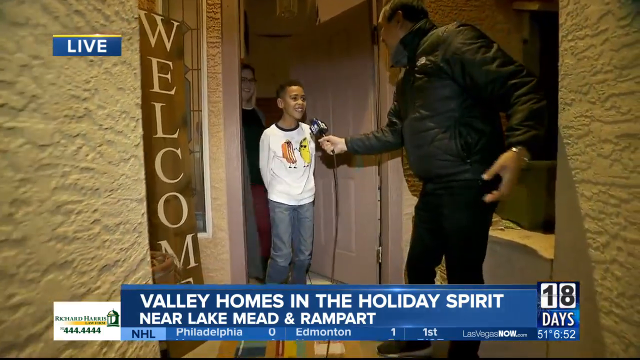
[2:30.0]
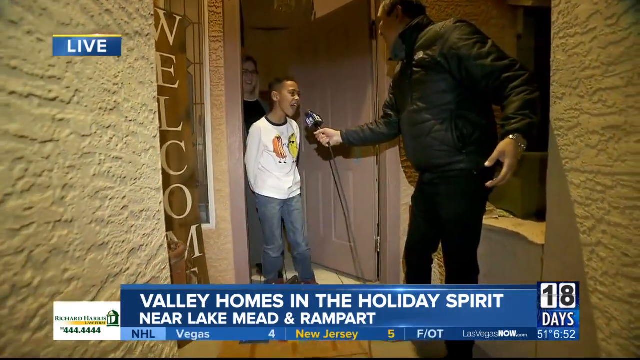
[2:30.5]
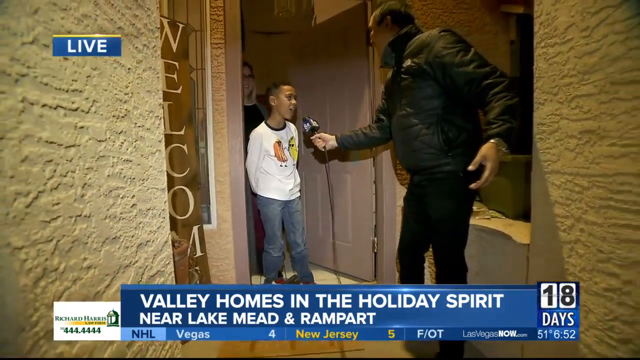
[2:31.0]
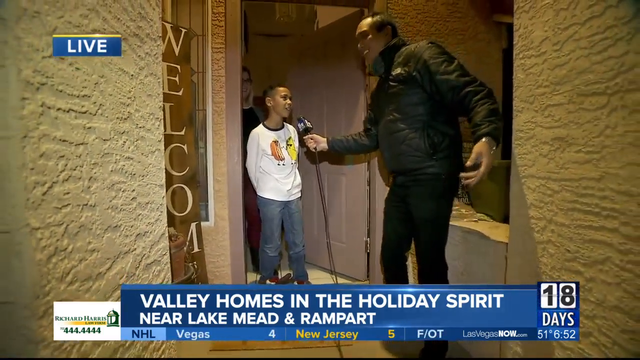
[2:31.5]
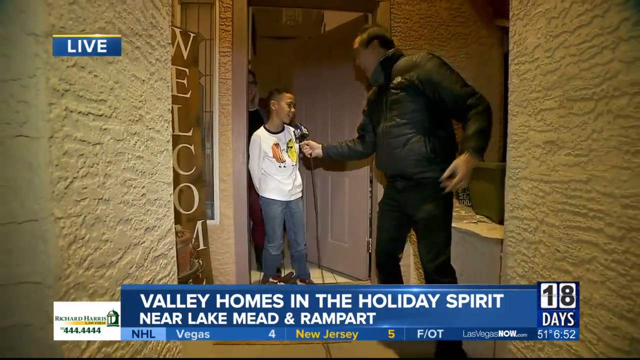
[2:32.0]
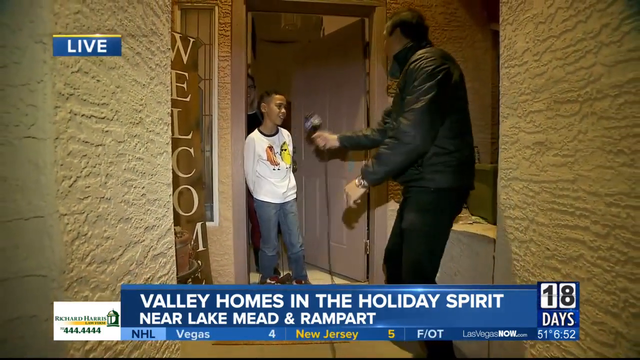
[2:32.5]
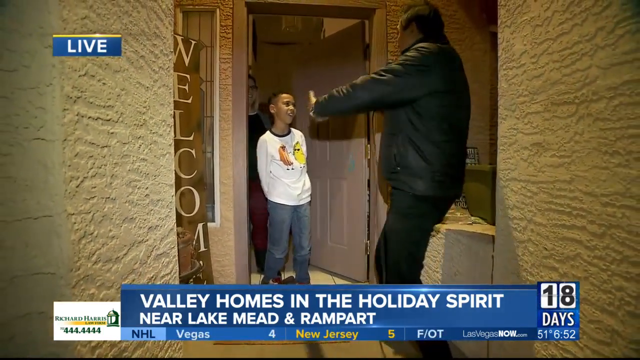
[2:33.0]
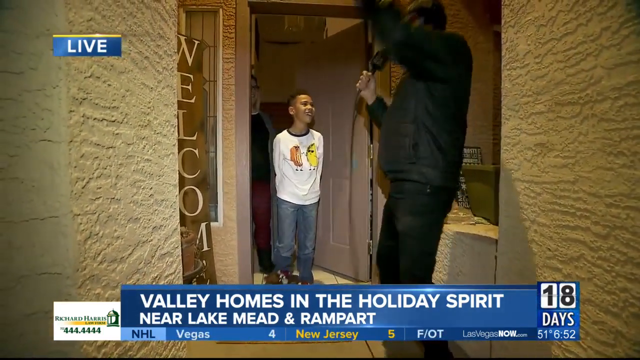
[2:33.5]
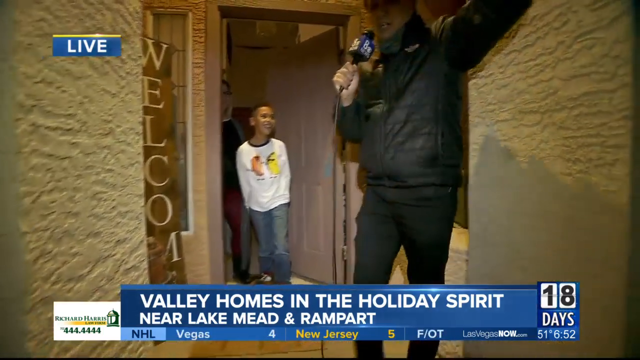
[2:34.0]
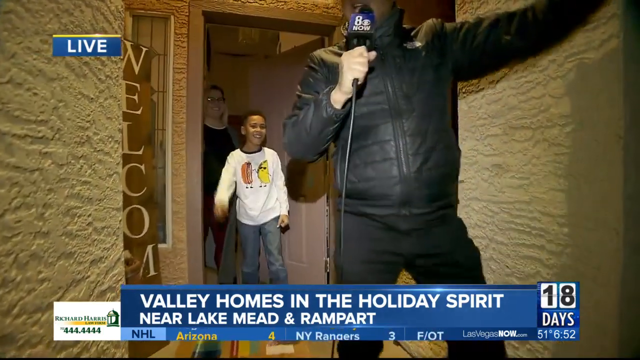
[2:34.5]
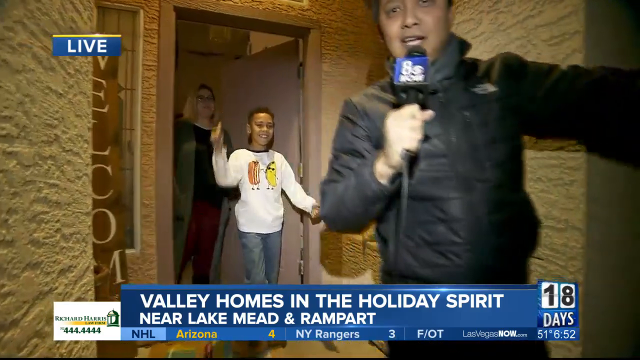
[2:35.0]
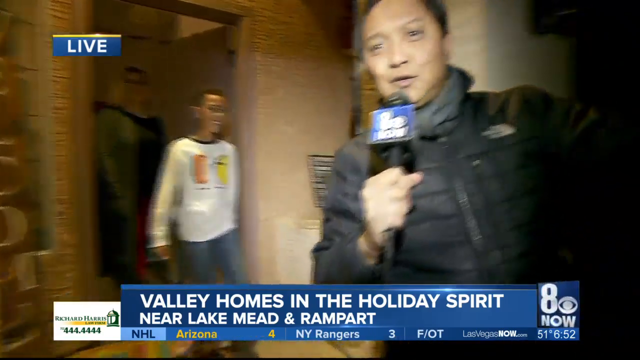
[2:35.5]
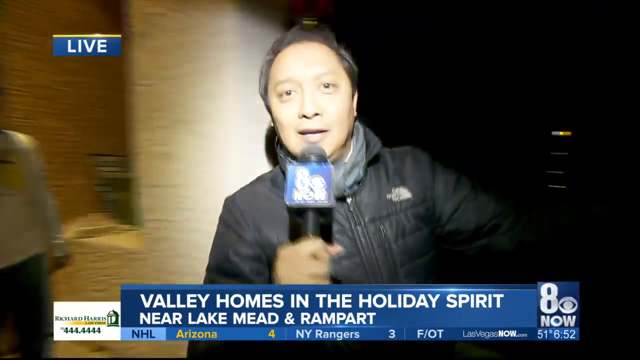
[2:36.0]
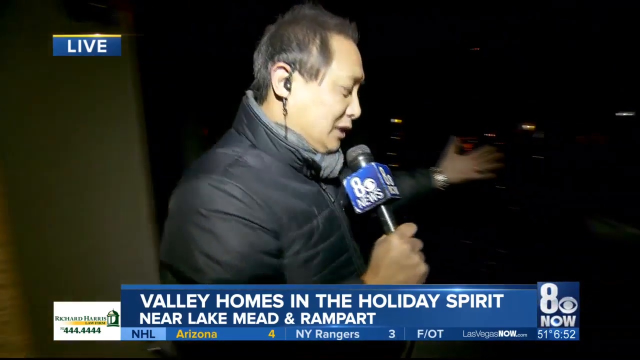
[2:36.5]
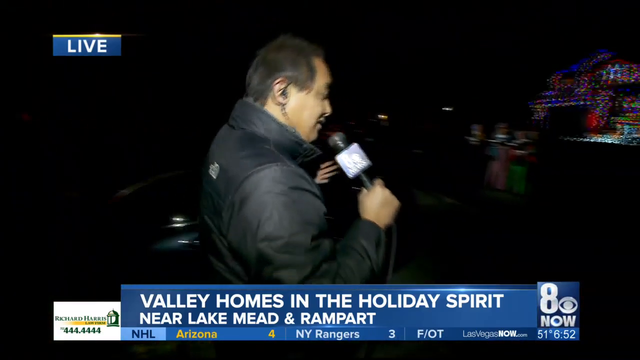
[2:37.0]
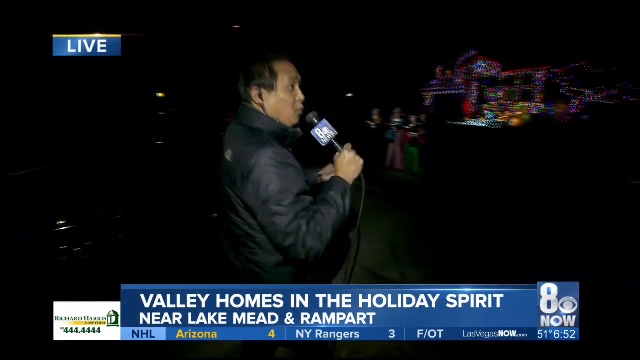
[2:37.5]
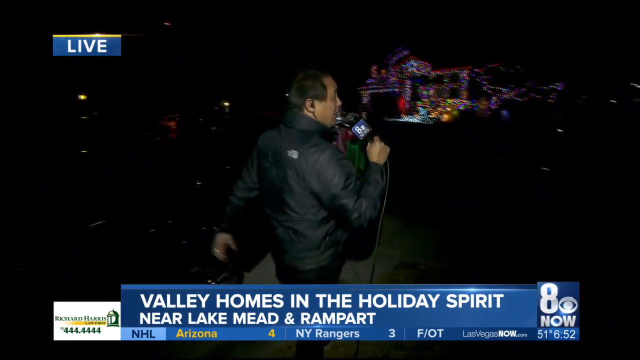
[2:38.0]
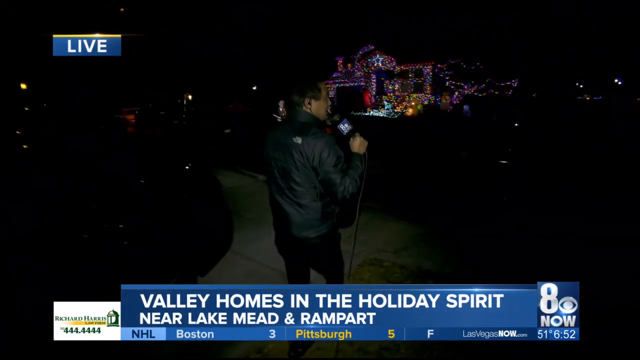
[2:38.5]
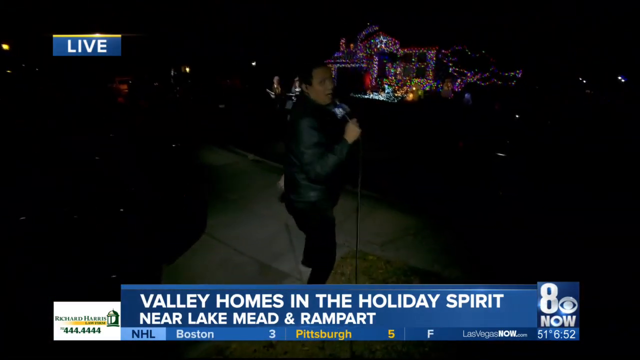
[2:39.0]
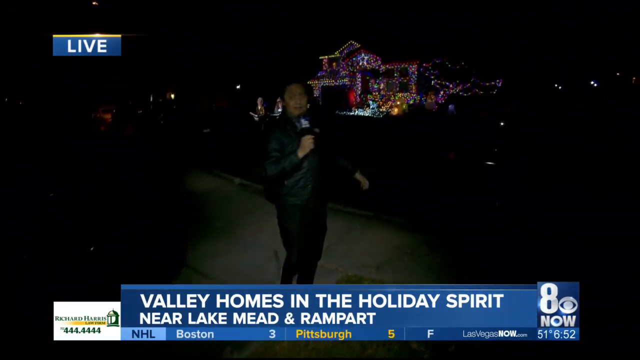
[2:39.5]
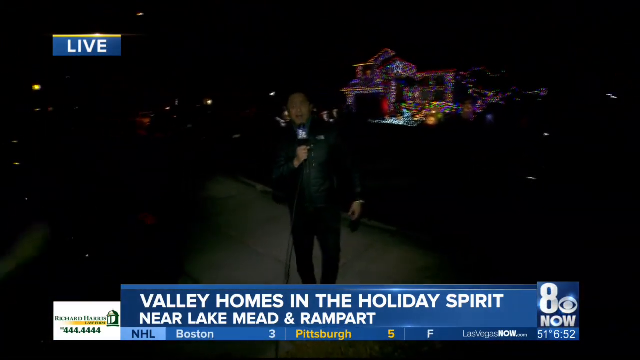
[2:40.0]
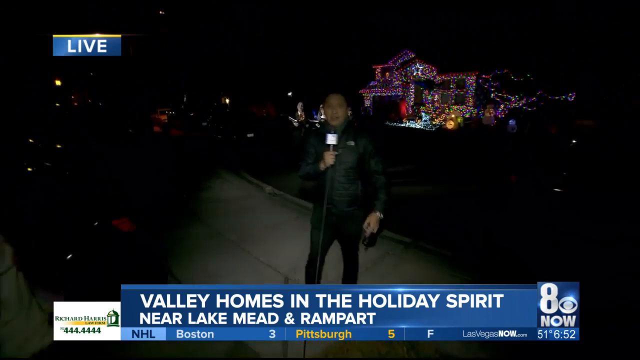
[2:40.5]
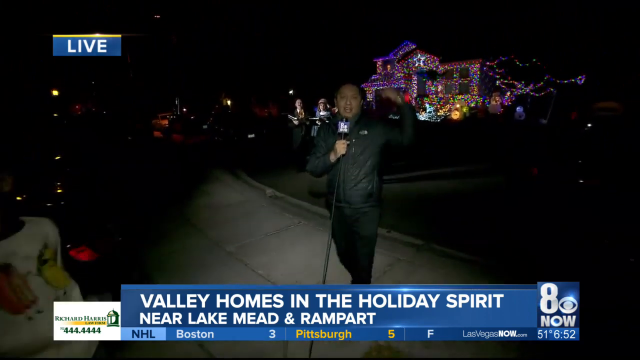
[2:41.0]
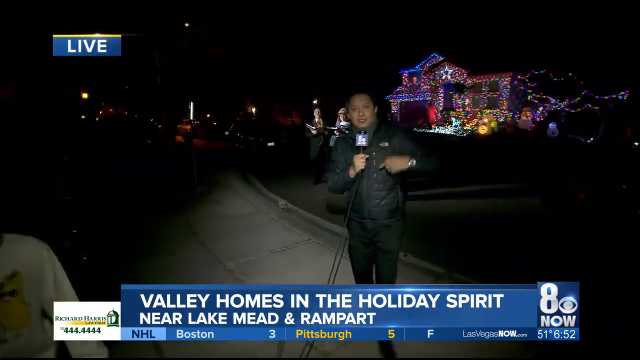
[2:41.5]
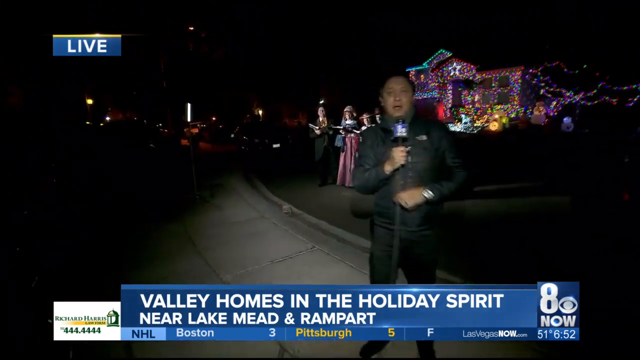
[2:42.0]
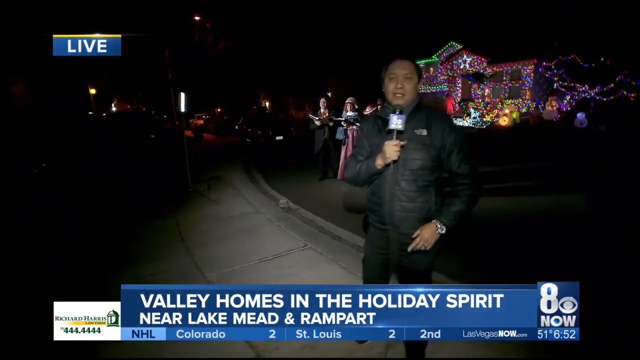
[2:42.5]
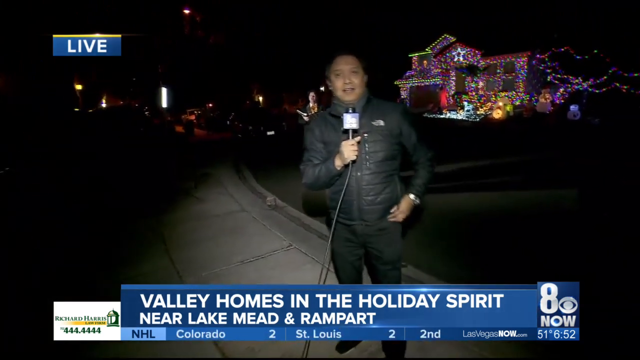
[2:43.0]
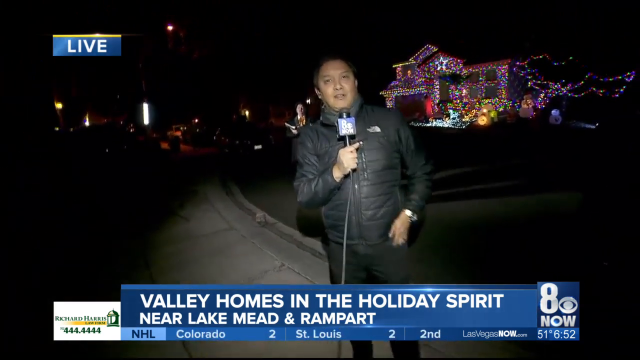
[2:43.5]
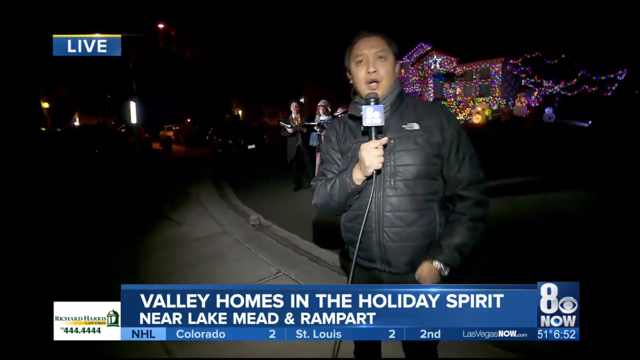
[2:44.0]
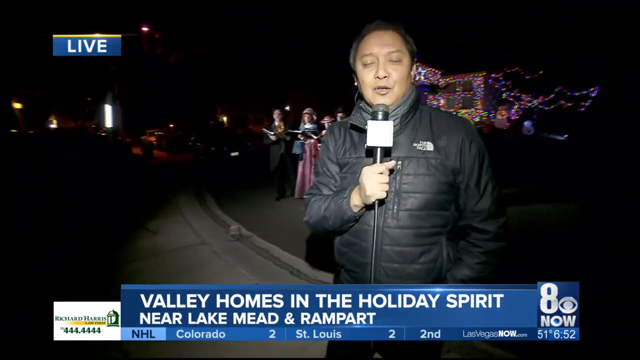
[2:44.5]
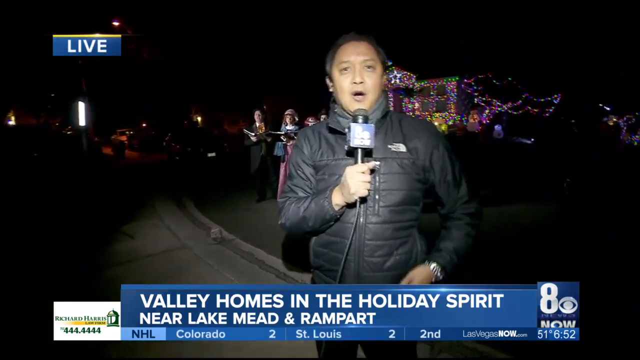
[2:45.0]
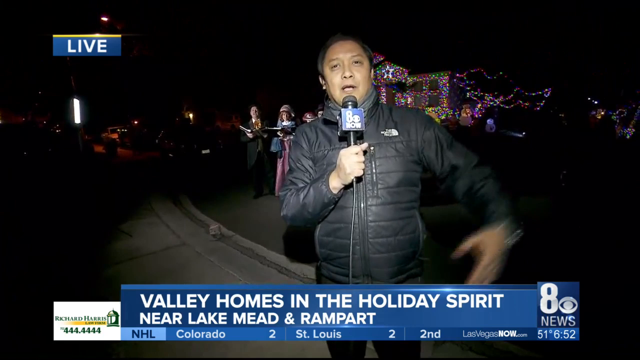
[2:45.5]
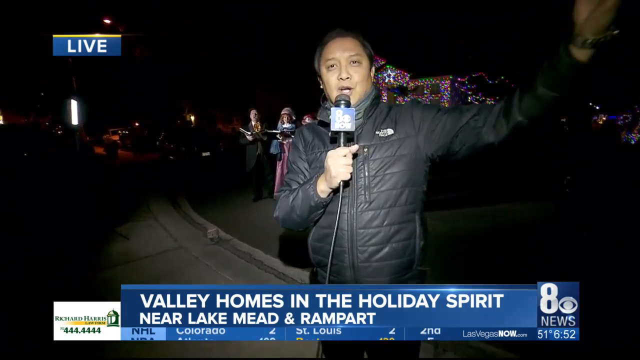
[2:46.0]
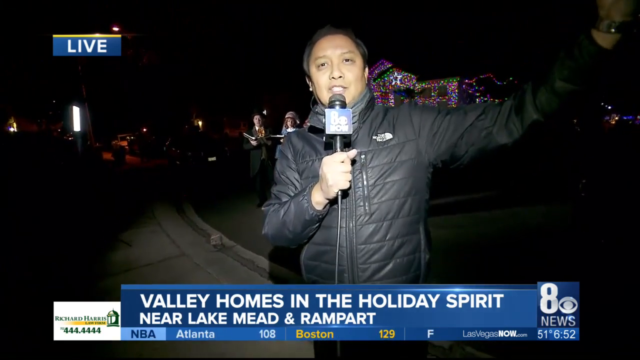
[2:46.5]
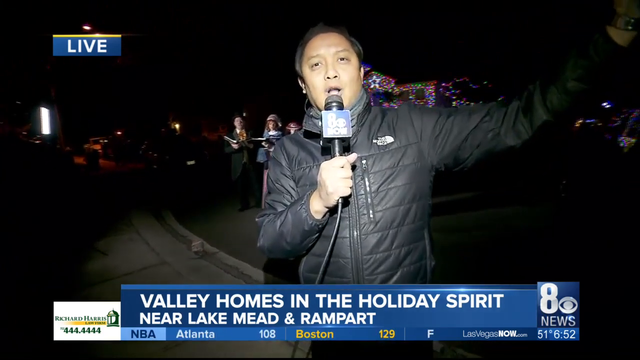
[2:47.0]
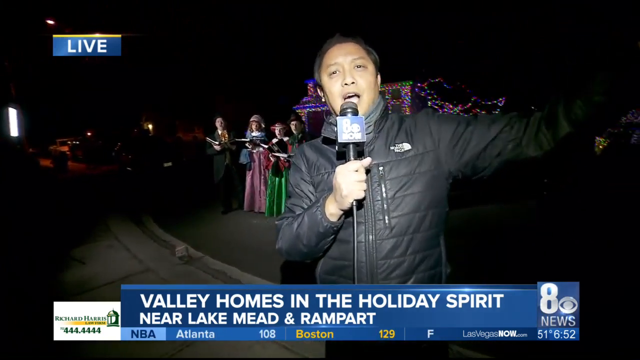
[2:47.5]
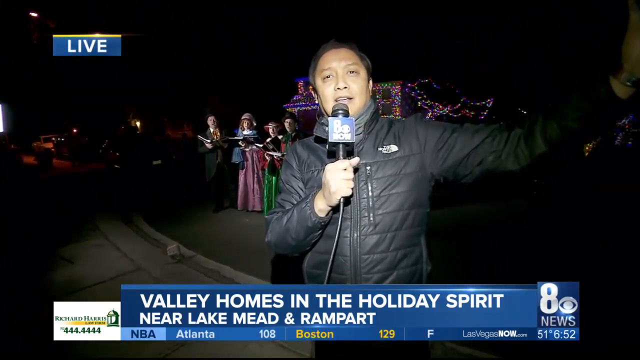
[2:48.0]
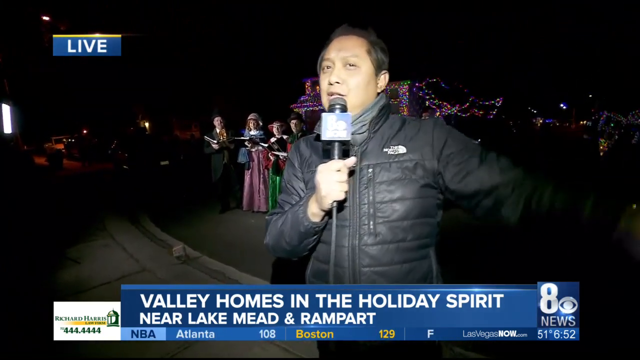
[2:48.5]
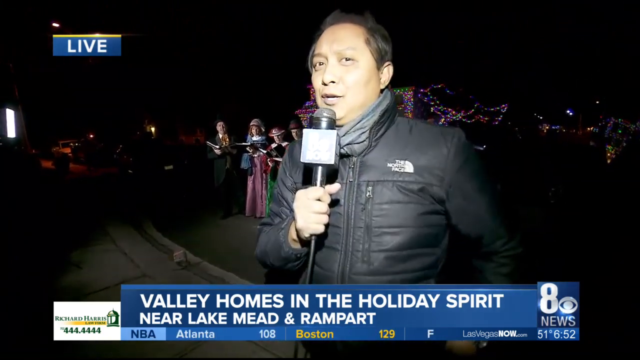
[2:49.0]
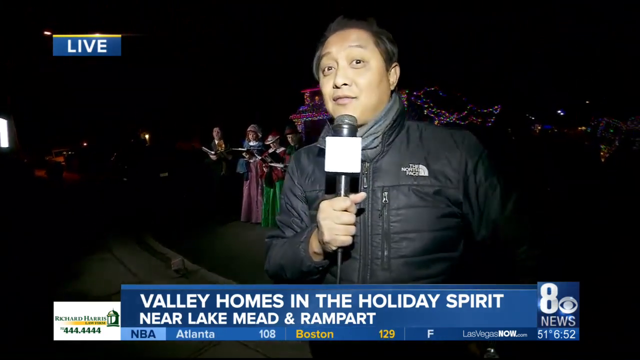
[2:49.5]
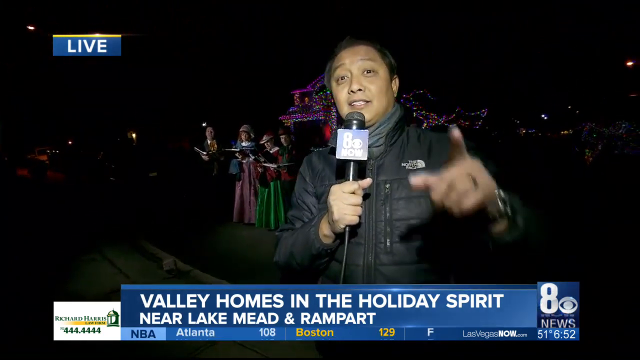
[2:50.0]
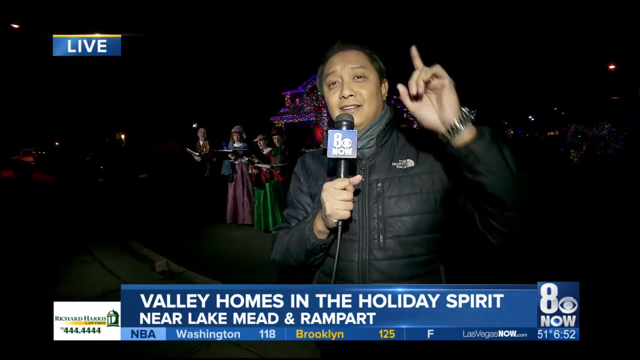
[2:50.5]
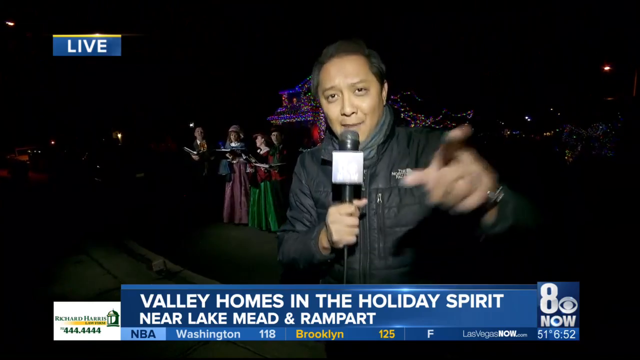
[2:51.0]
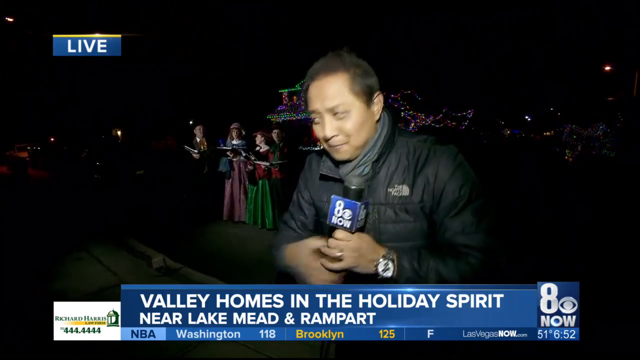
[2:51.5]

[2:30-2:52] The reporter interviews the child, holding the microphone close to the child's mouth, and the child talks happily and confidently into it. A parent appears in the doorway behind the child. The boy wears blue jeans and a white long-sleeve t-shirt with cartoon-like illustrations of what looks like a hot dog and maybe a taco. The woman behind him, probably his mother, wears a black outfit with some kind of green robe over it; she has medium-length, straight blonde hair and black-framed glasses. The reporter walks back towards the original lit-up house, and the camera follows, filming him from behind as he approaches; the child follows him too. When he gets close to the carol singers, he turns back towards the camera and talks straight down it, gesturing with his arms as if something is about to happen. He points towards the screen and then at the carol singers, as if they are about to start singing. At the very end, a graphic page appears that says "8 News Now will be right back".